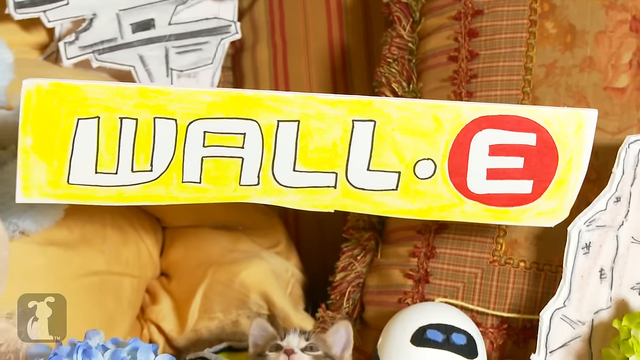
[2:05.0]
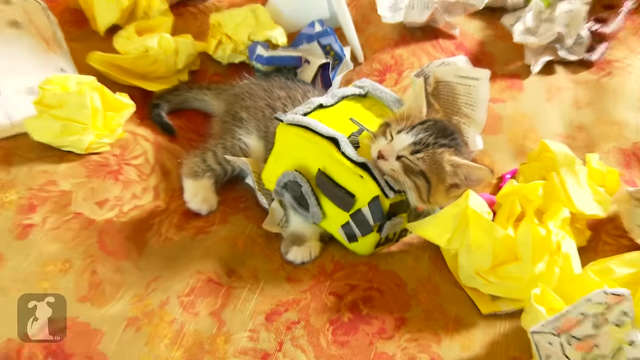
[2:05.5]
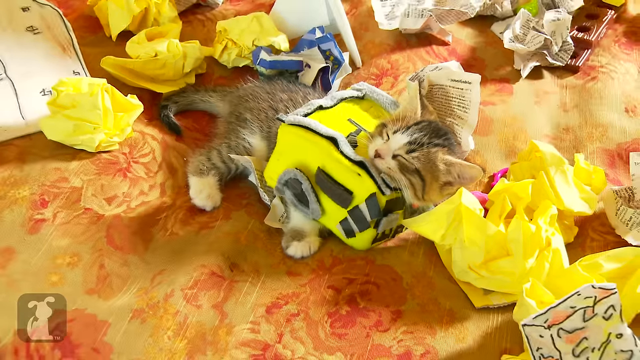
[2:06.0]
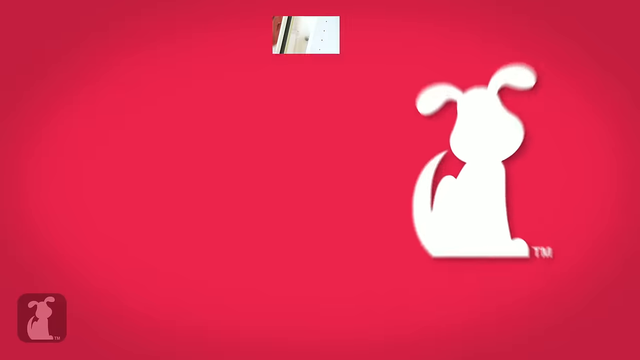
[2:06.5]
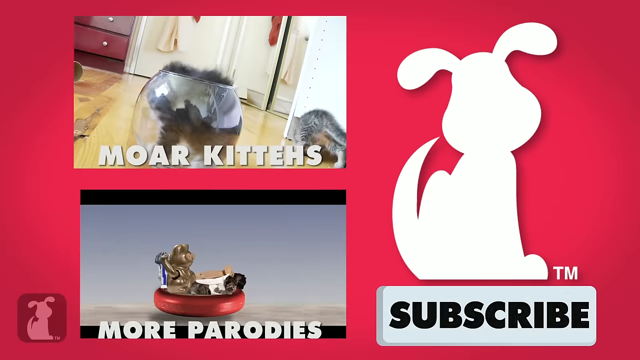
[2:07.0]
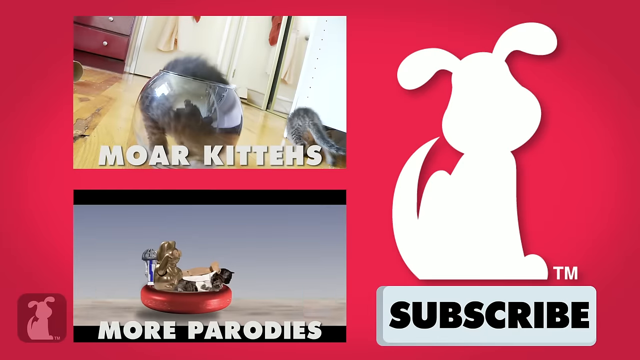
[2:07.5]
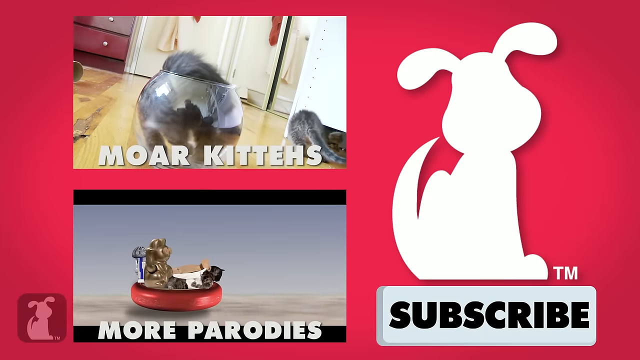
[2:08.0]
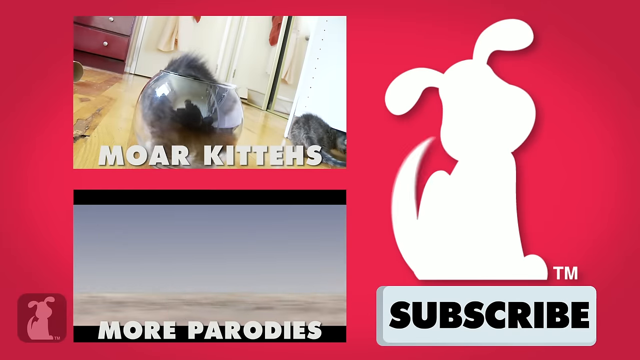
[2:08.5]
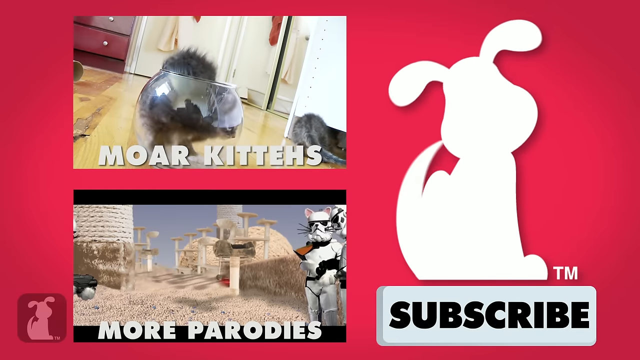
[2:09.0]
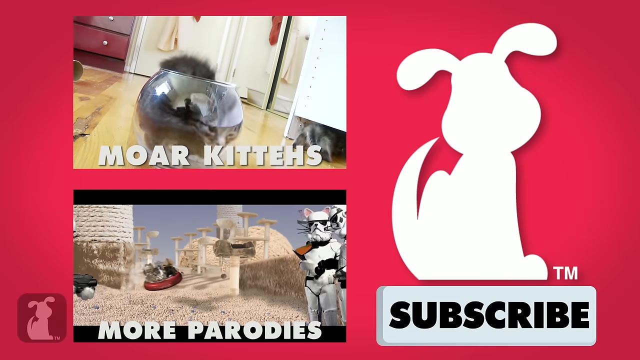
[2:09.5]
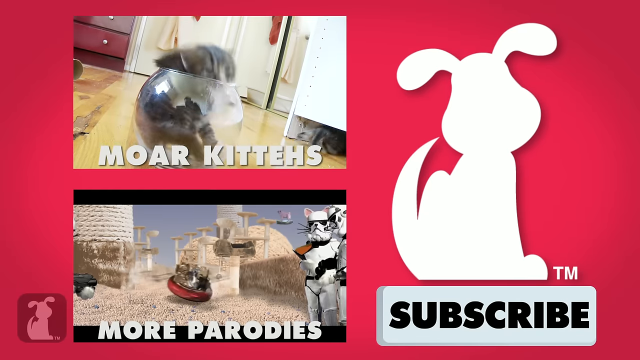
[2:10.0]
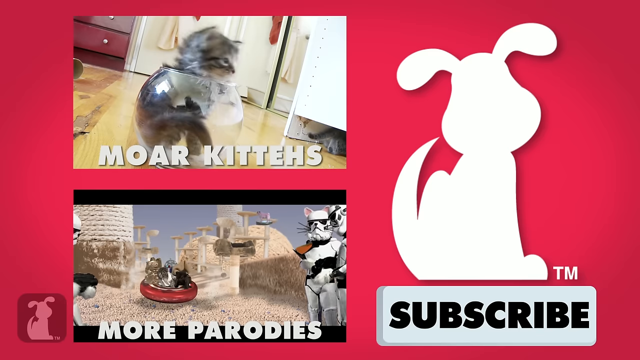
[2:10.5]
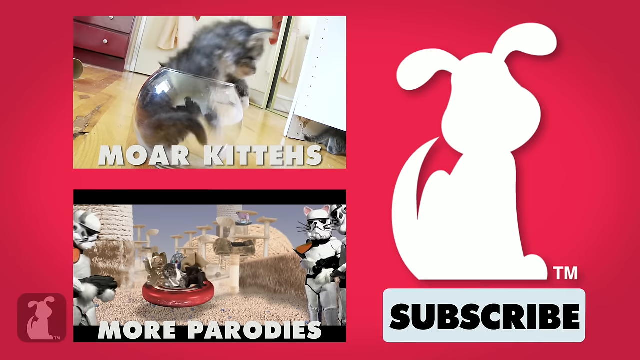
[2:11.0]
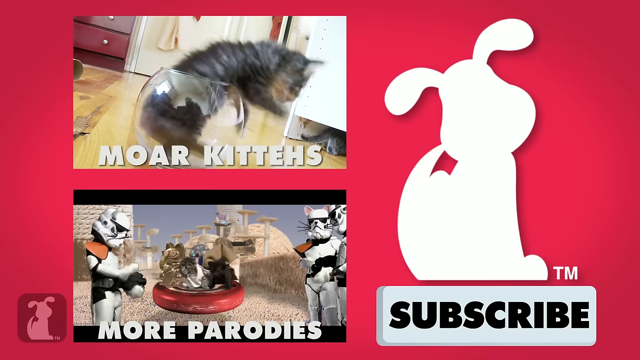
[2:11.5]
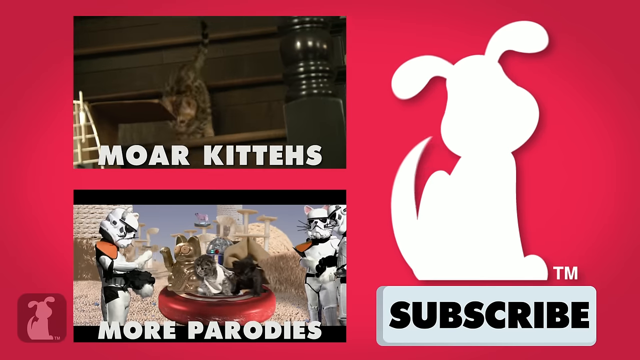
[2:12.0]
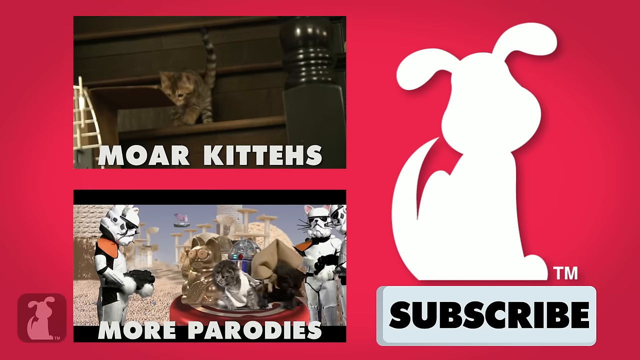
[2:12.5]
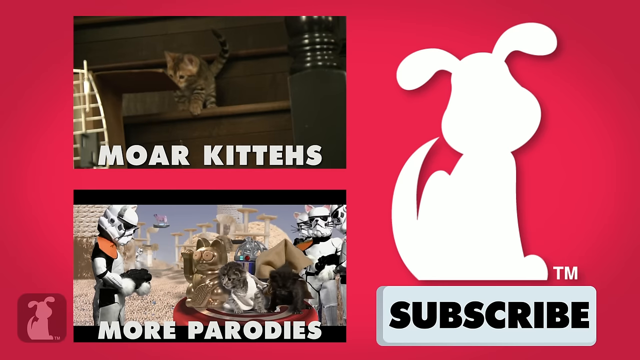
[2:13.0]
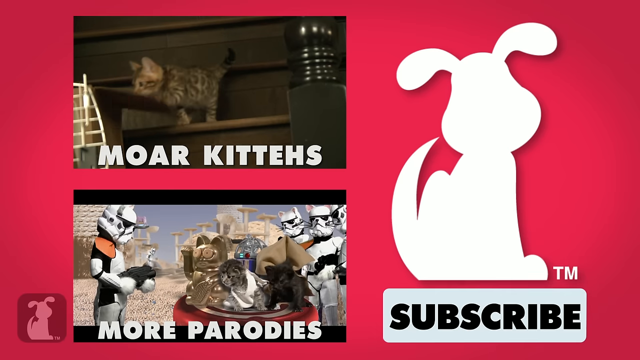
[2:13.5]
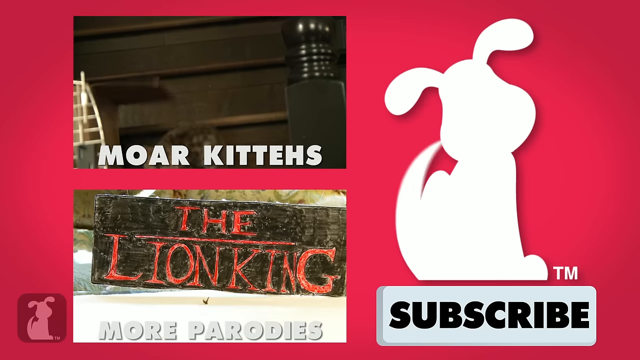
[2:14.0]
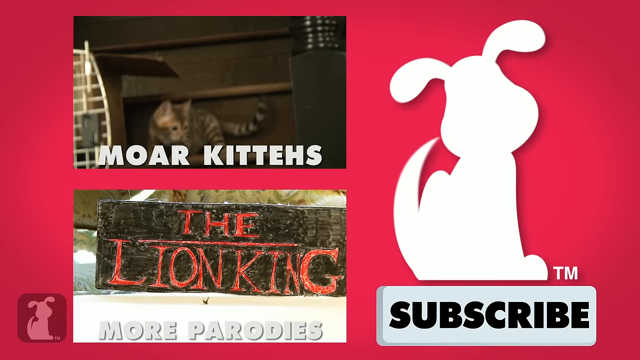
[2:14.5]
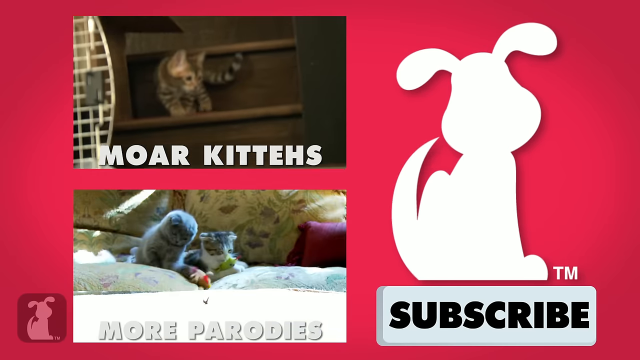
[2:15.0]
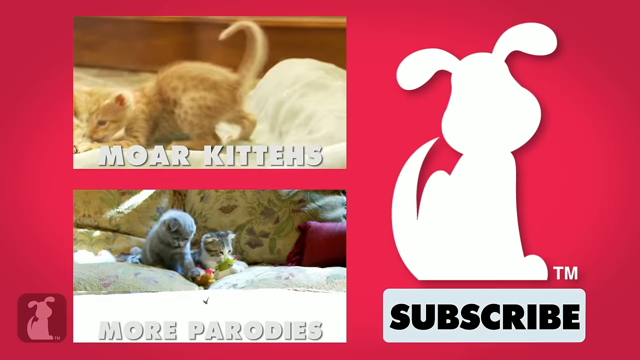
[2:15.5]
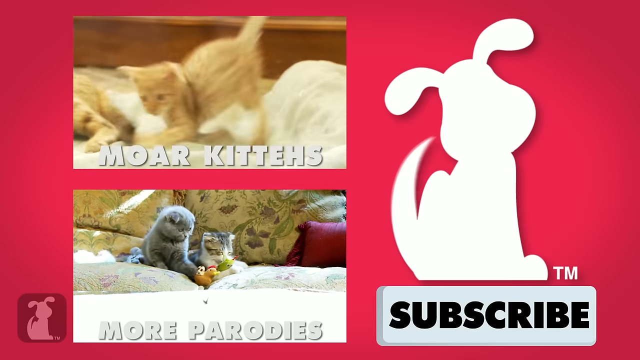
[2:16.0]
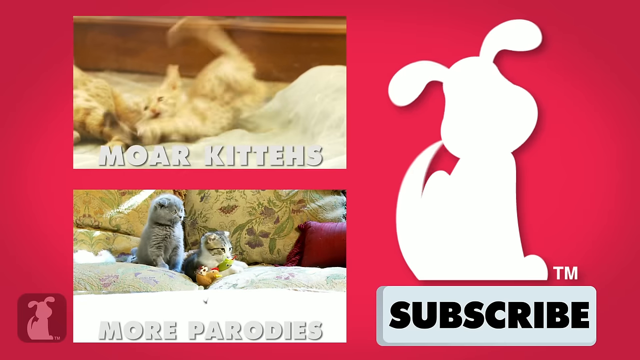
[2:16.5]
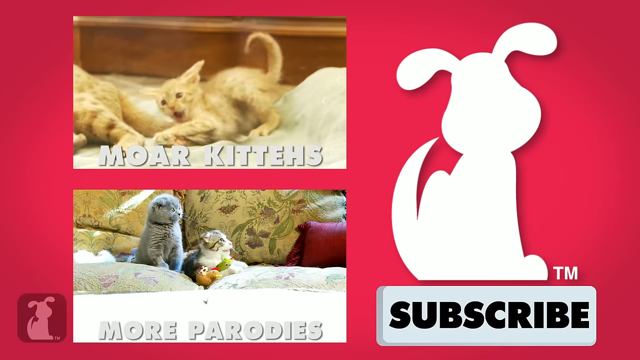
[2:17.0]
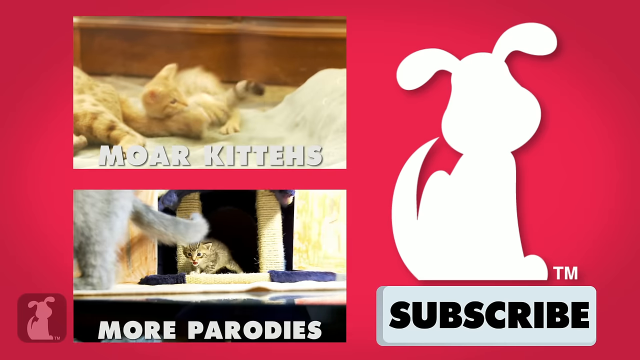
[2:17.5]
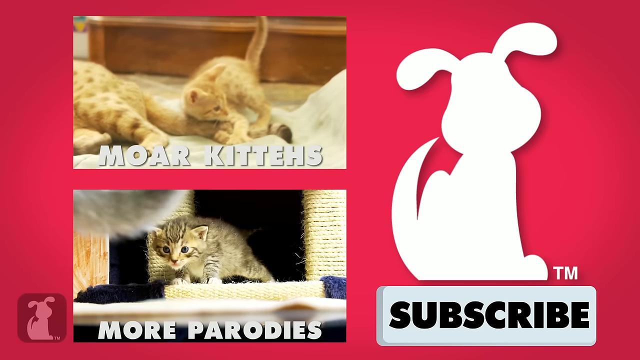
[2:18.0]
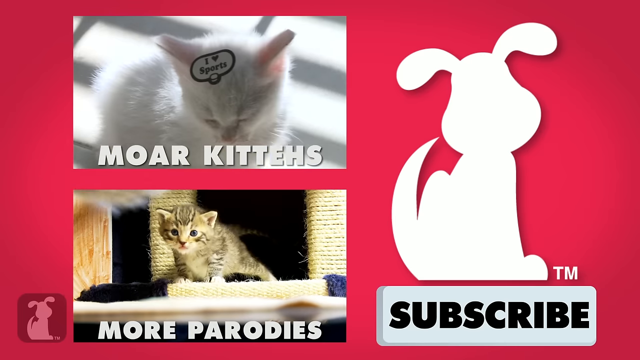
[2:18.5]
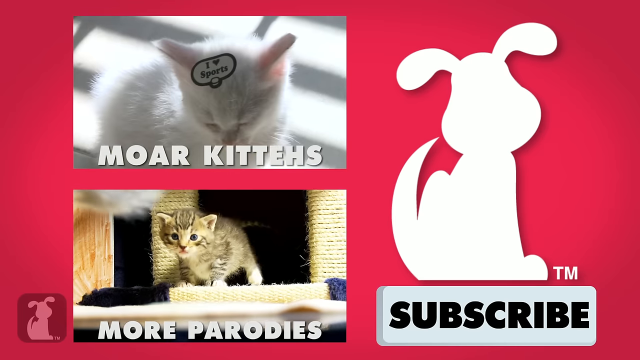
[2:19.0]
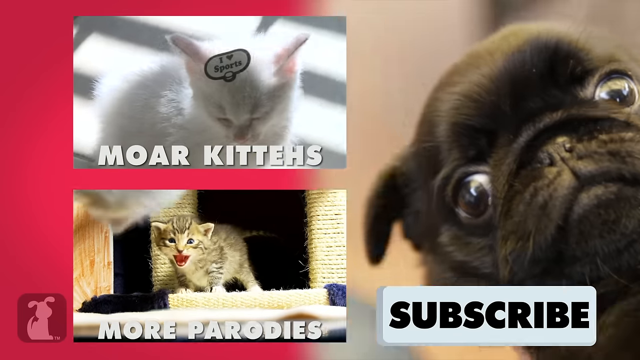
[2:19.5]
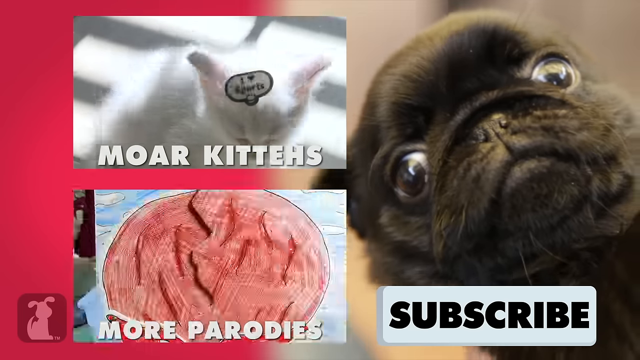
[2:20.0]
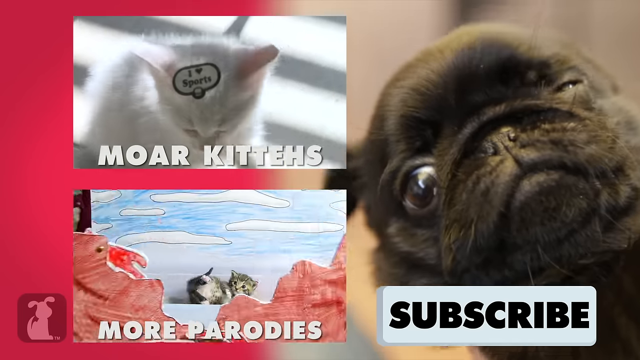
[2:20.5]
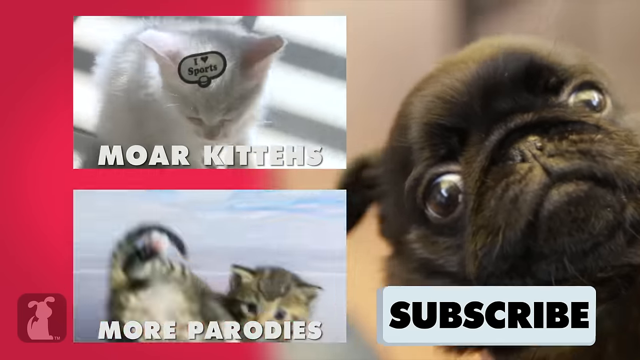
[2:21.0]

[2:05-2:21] The cat is sleeping, still with its woolly, squarish body. The video cuts to what seems to be two videos, one that says "more kittens" and the bottom one that says "more parodies", with the silhouette of a white dog to the right and "subscribe" below it. A little afterwards, a picture of a dog slides in, seemingly a black pug, winking. The same silhouette is at the bottom left, a bit more faded, and on the right is a picture of a cat with "subscribe" in white letters right above it. It is most likely a YouTube ad or a video posted on YouTube.